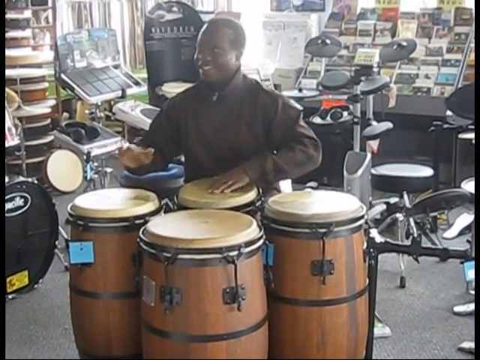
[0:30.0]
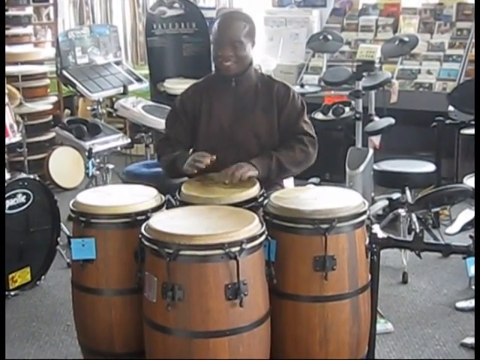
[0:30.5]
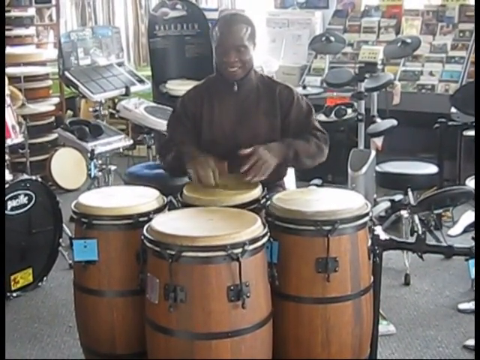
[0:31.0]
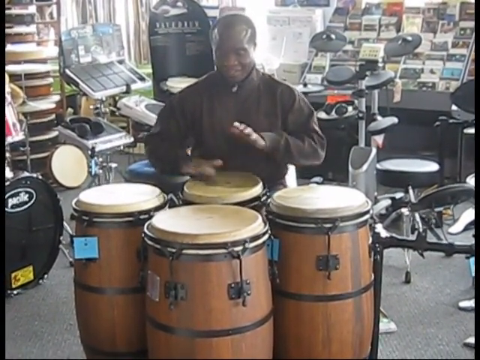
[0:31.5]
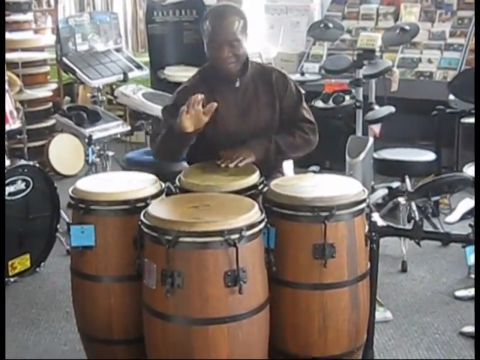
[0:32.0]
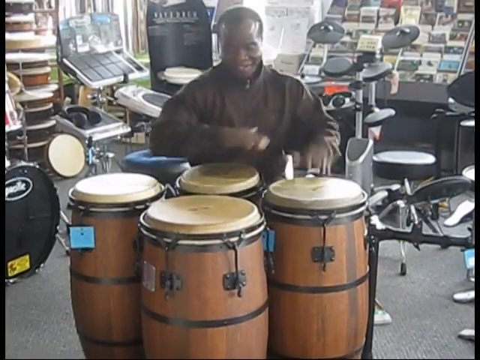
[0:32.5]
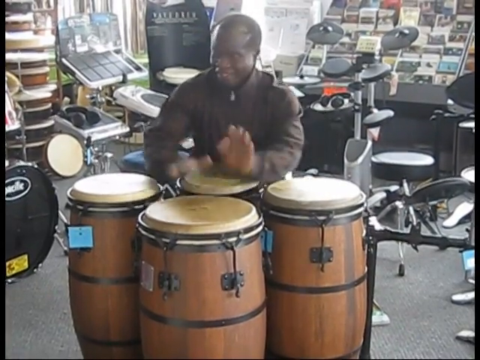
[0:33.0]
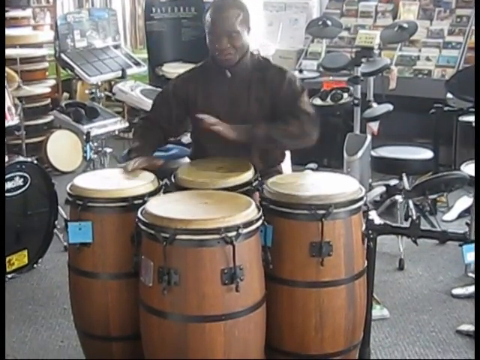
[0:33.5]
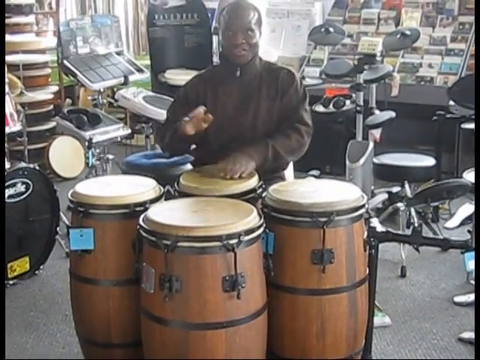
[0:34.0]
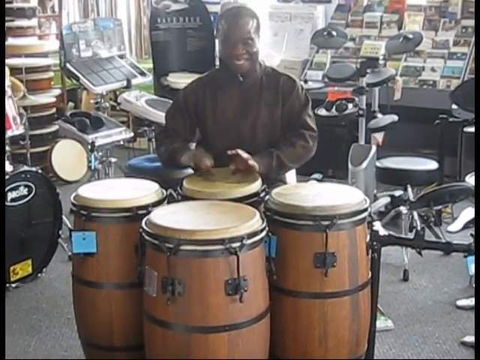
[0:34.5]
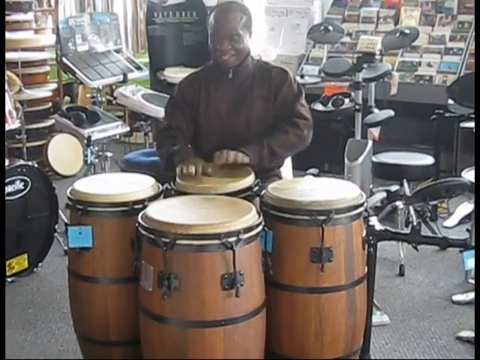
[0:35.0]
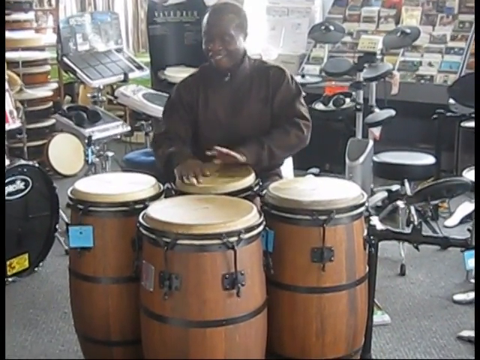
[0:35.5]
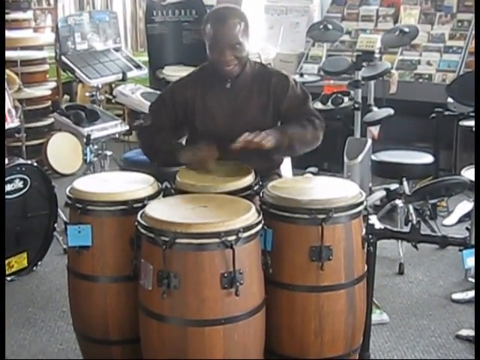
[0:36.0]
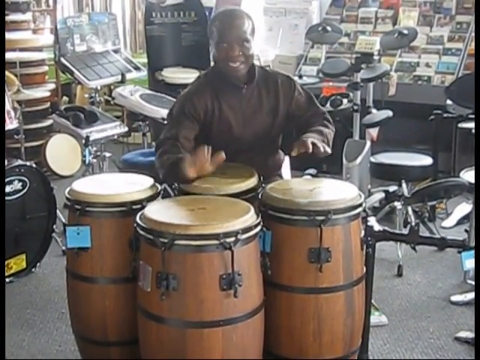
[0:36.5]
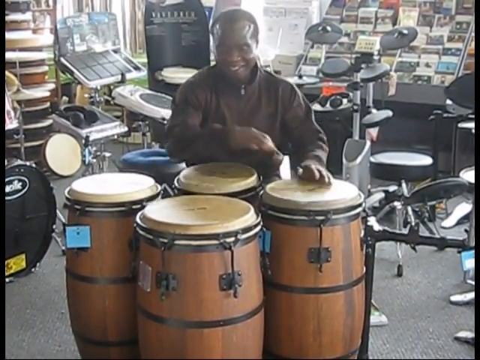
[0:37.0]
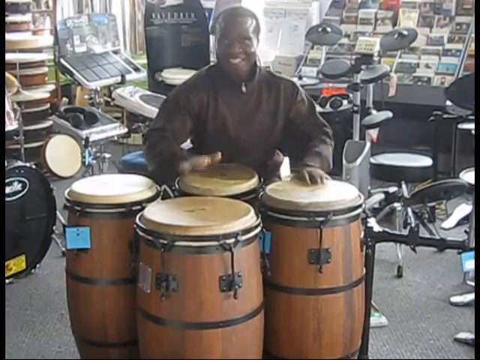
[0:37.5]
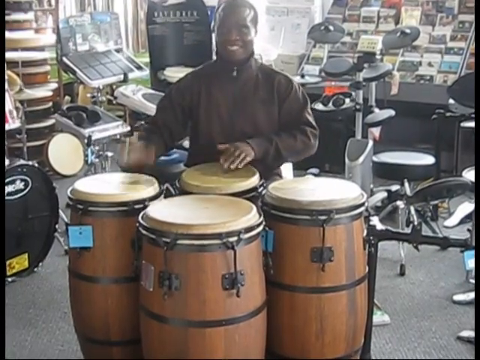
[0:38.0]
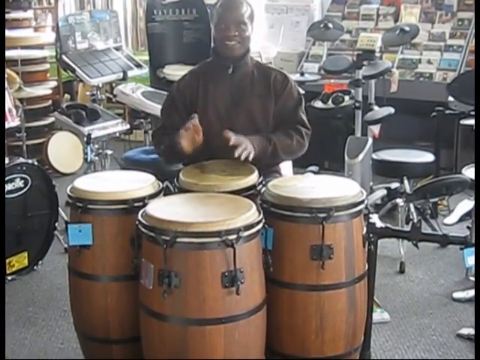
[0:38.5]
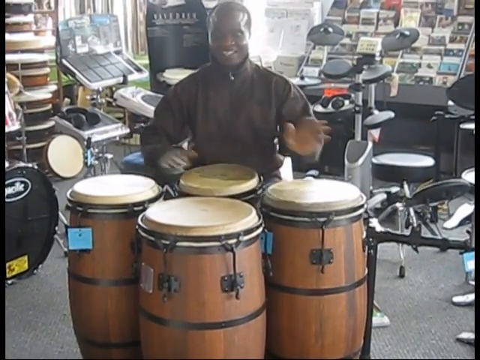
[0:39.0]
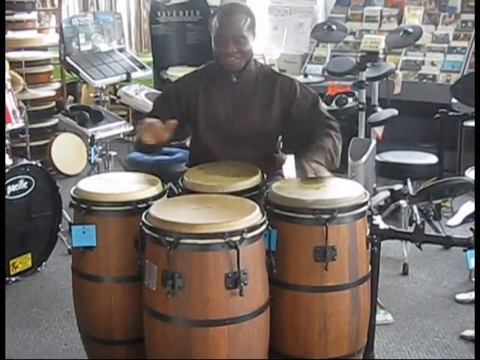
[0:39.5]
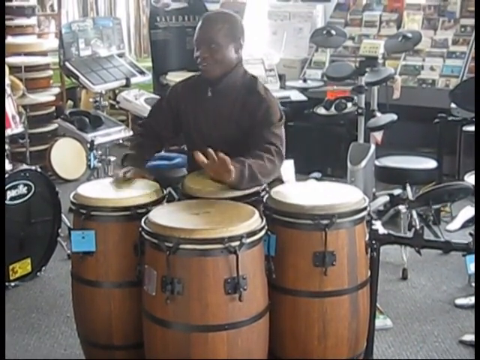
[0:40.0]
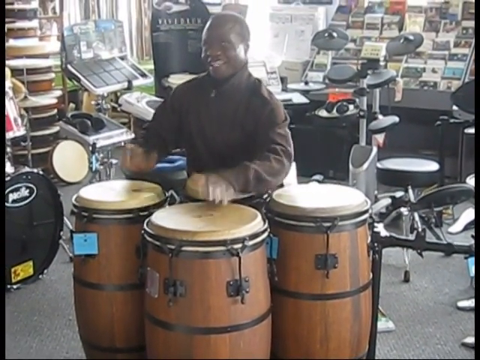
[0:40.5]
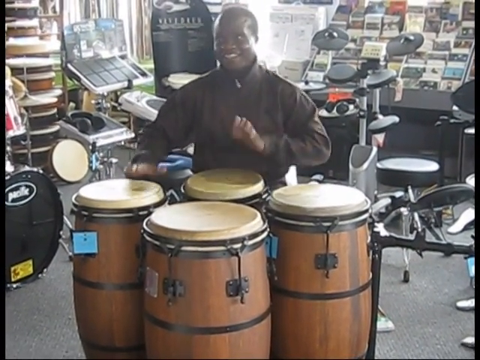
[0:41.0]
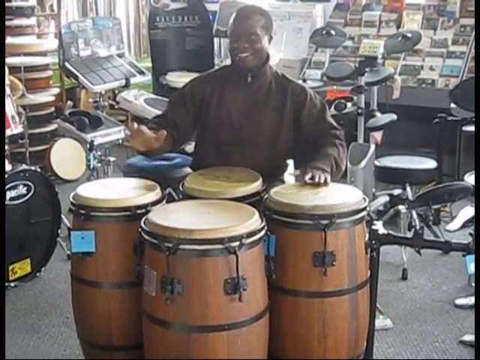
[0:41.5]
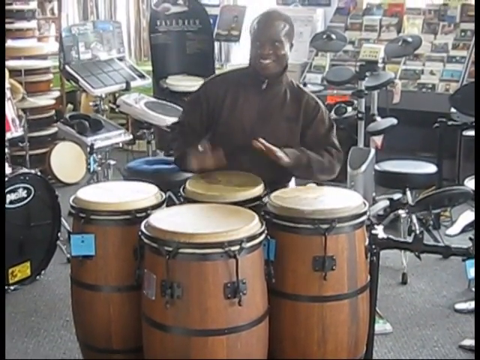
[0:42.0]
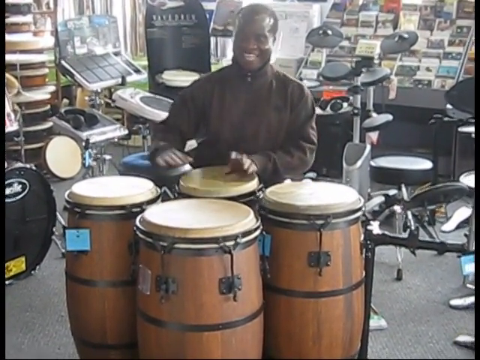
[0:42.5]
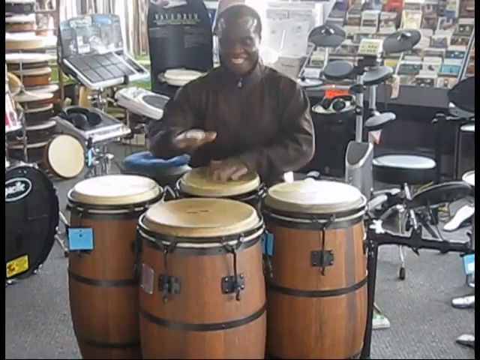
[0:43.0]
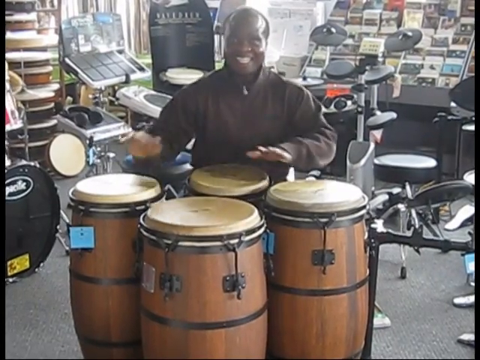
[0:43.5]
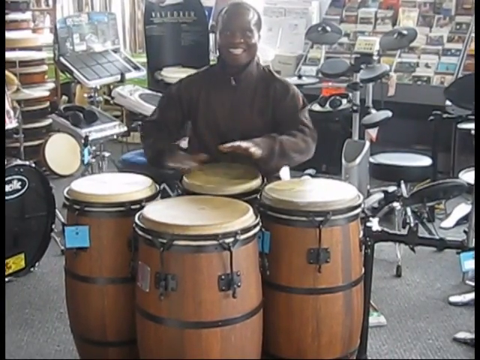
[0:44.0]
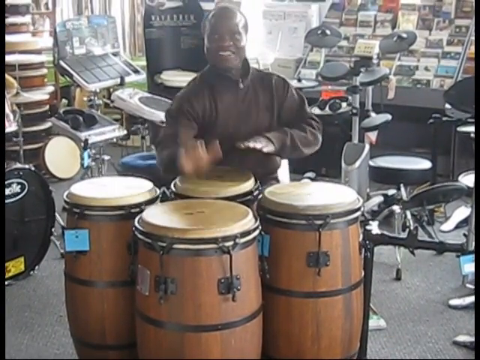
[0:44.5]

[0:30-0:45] The man continues playing the congas energetically, with a smile on his face. He seems to still be speaking, possibly to a crowd, and seems to enjoy what he is doing. The camera is a little bit shaky, probably a handheld device recording. He could possibly be giving a lesson or information about how to play. The time frame is hard to tell, but the recording may date from the early 2000s.